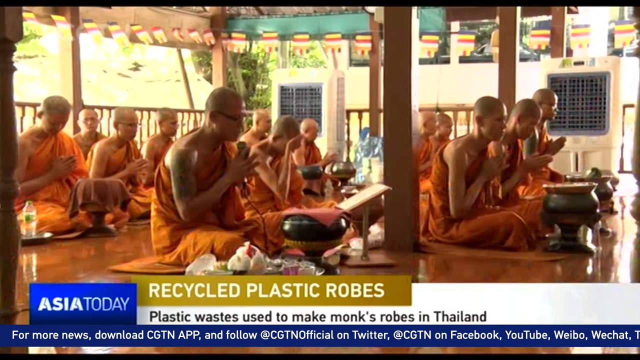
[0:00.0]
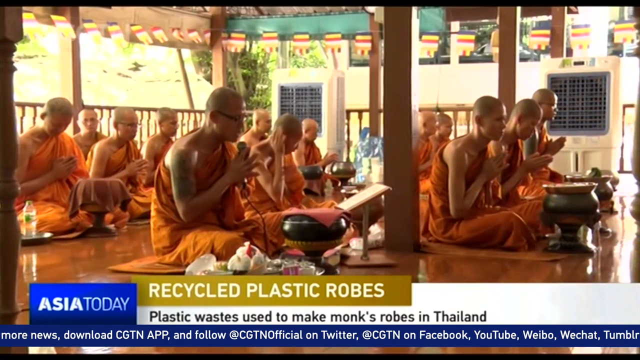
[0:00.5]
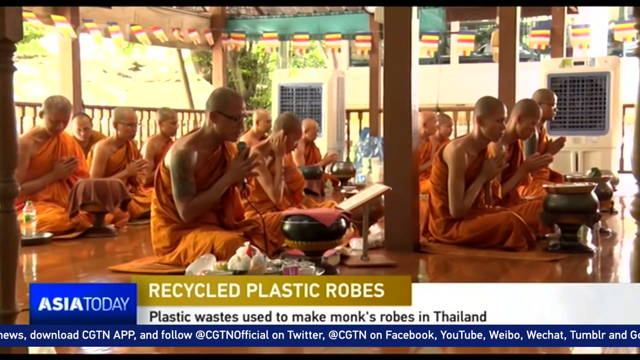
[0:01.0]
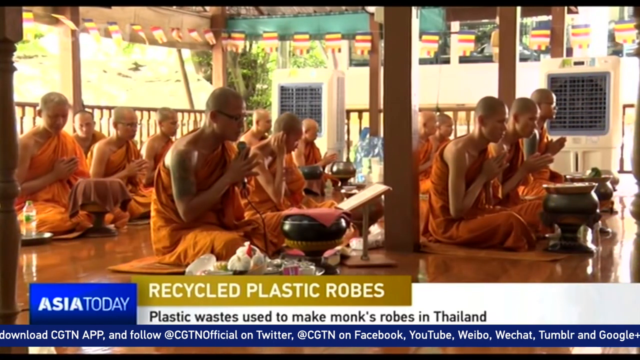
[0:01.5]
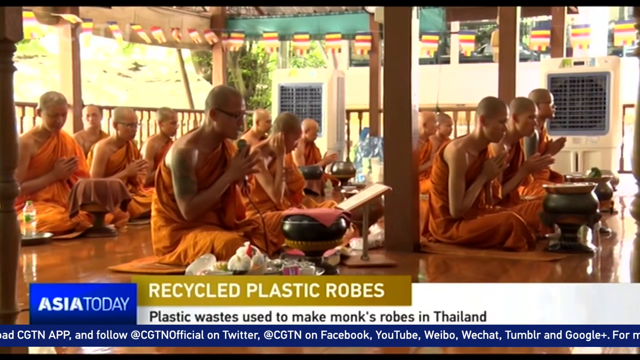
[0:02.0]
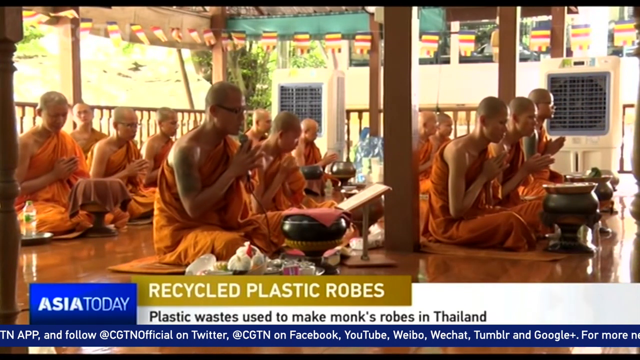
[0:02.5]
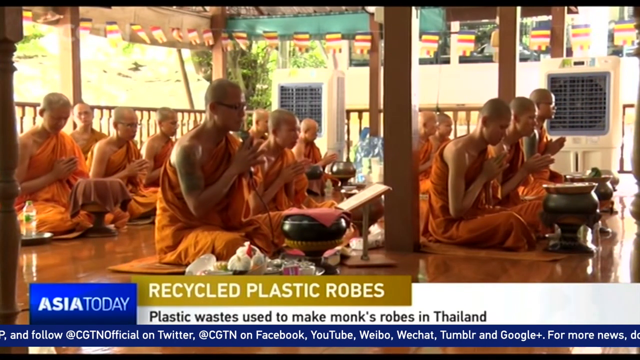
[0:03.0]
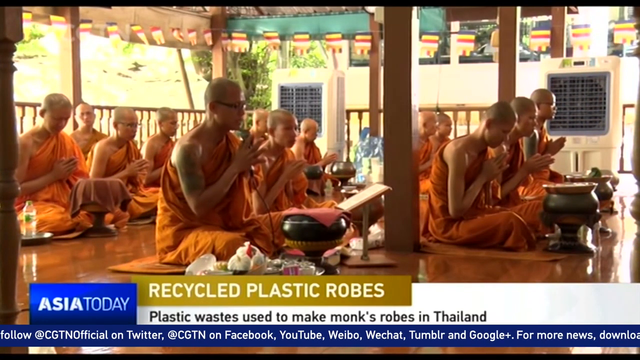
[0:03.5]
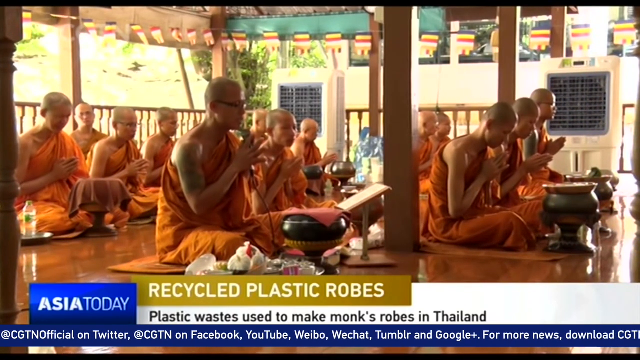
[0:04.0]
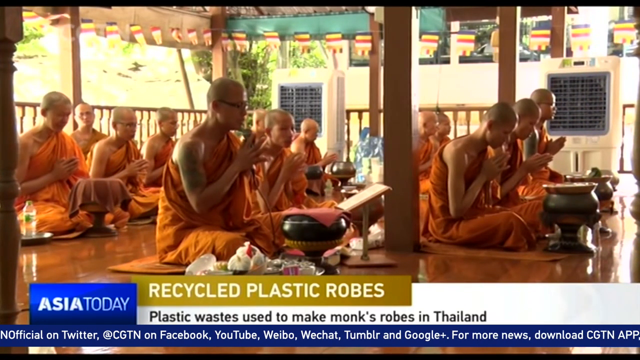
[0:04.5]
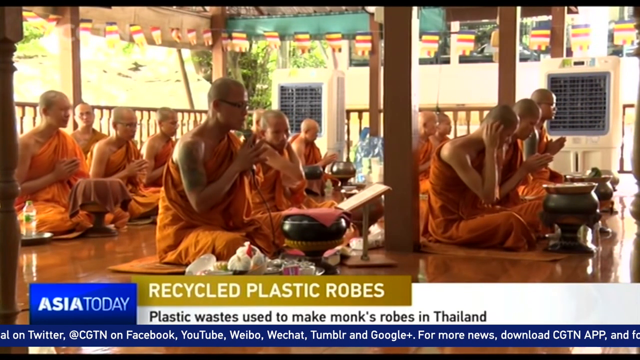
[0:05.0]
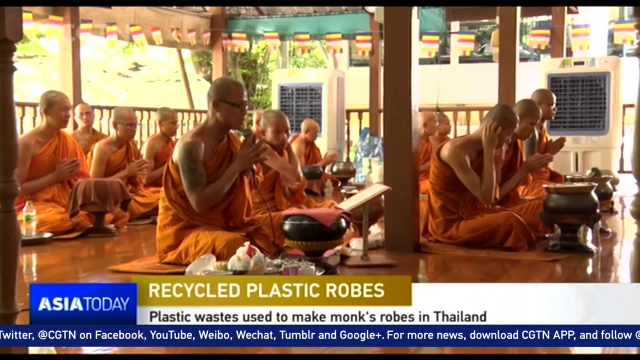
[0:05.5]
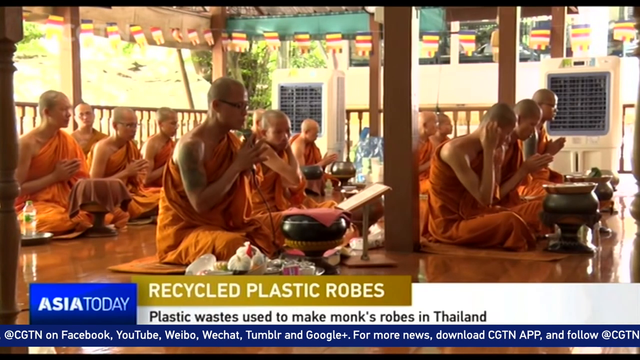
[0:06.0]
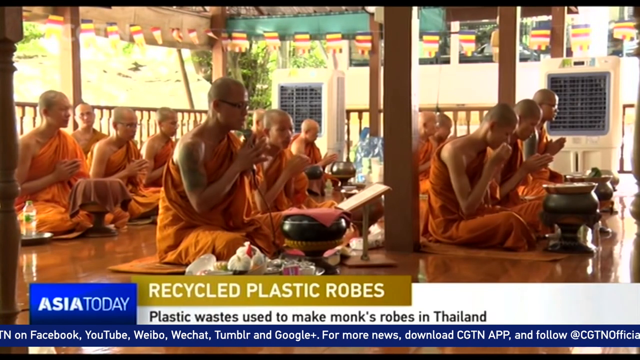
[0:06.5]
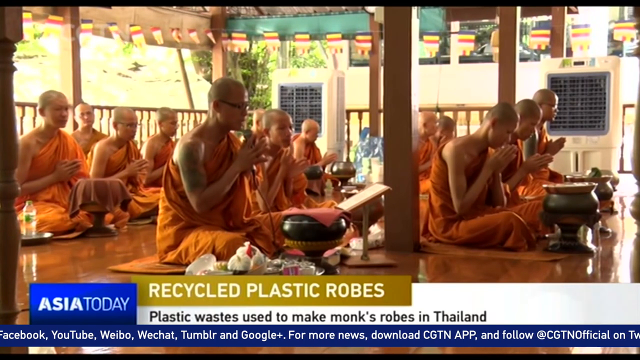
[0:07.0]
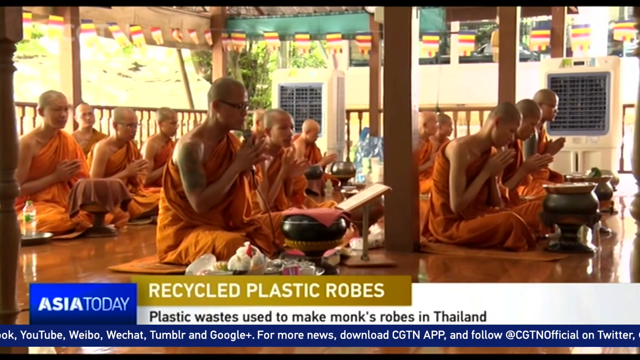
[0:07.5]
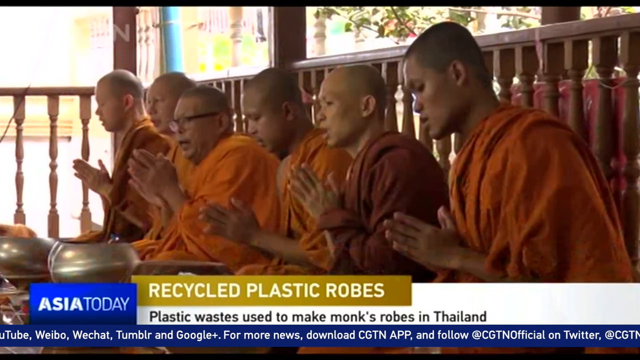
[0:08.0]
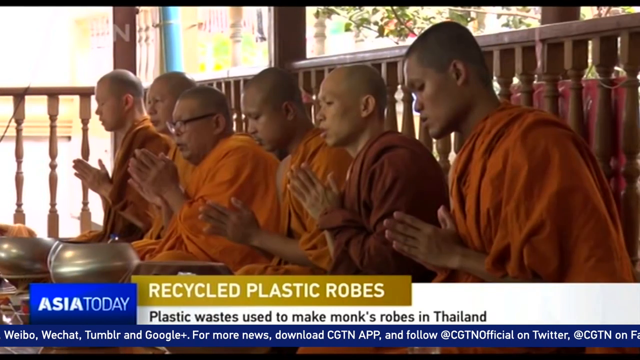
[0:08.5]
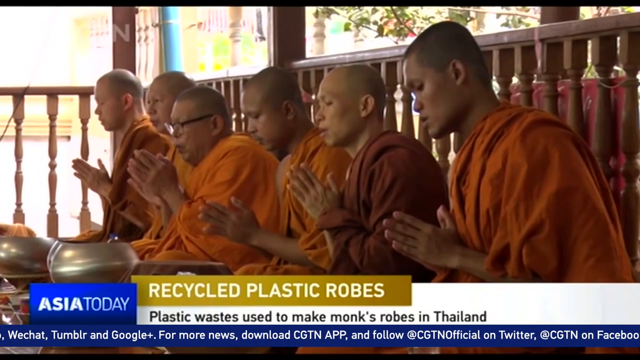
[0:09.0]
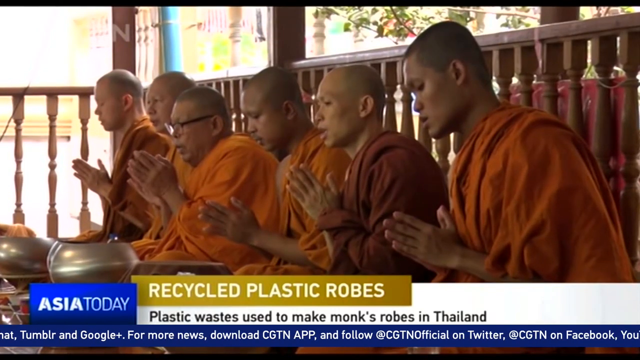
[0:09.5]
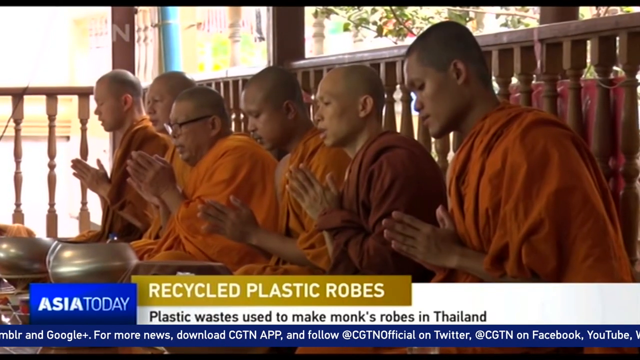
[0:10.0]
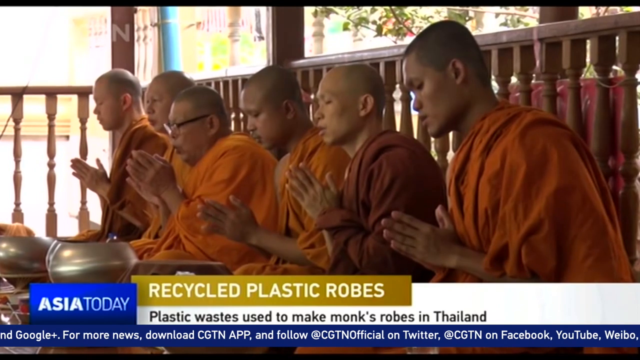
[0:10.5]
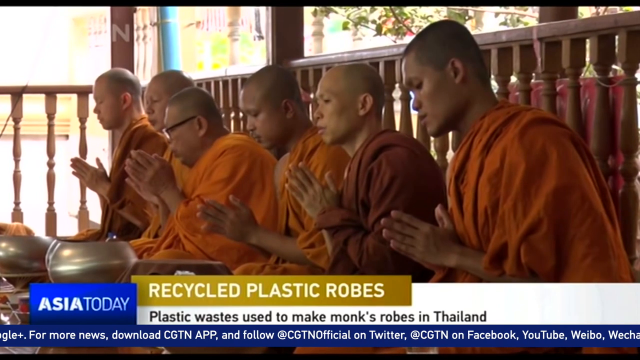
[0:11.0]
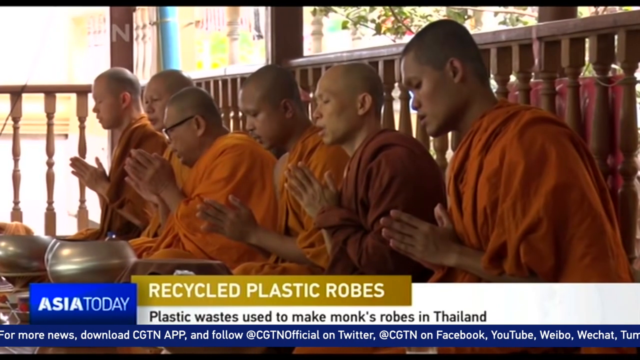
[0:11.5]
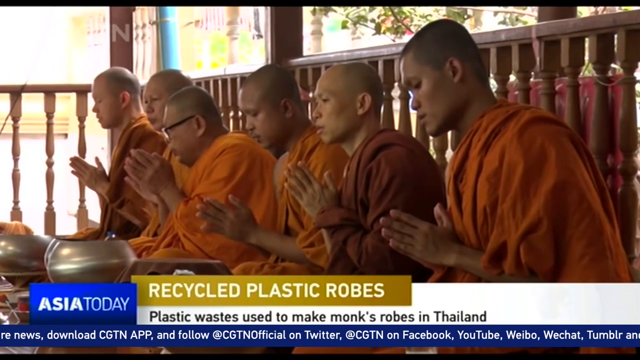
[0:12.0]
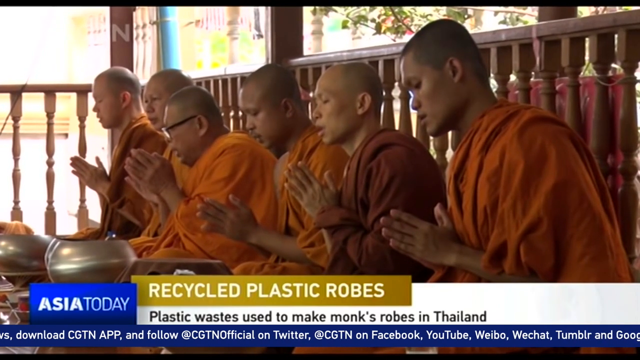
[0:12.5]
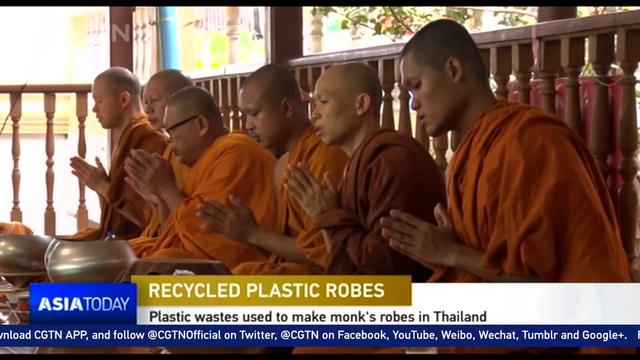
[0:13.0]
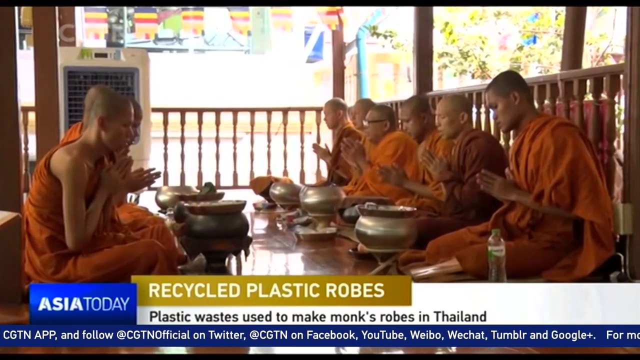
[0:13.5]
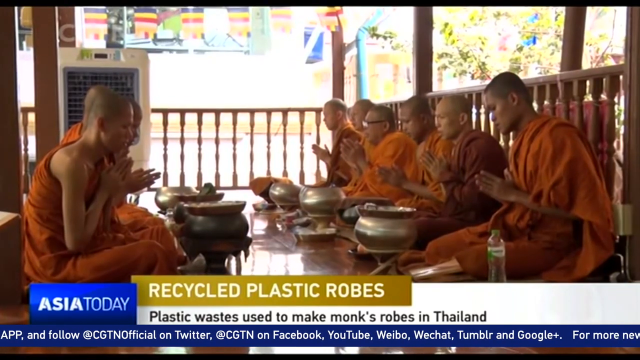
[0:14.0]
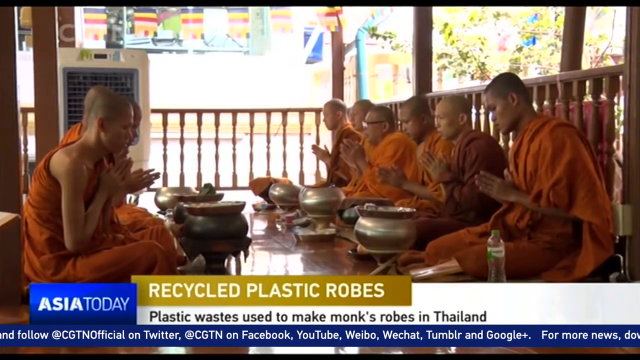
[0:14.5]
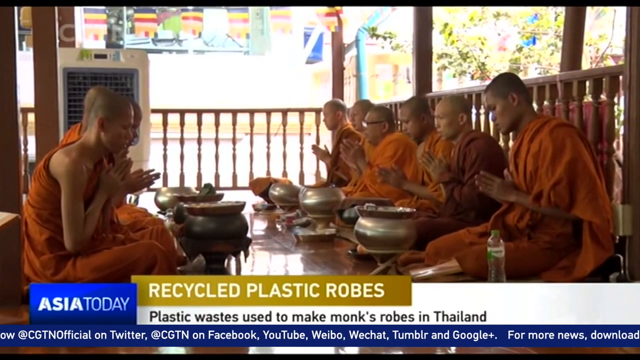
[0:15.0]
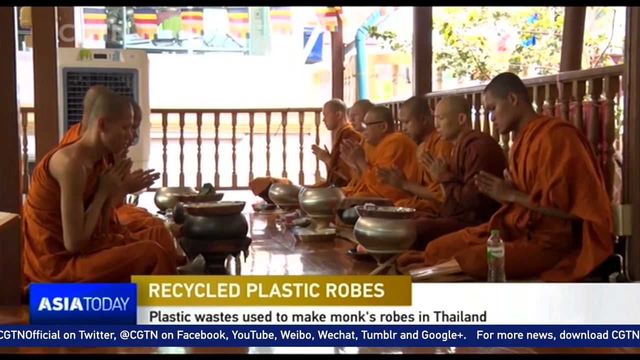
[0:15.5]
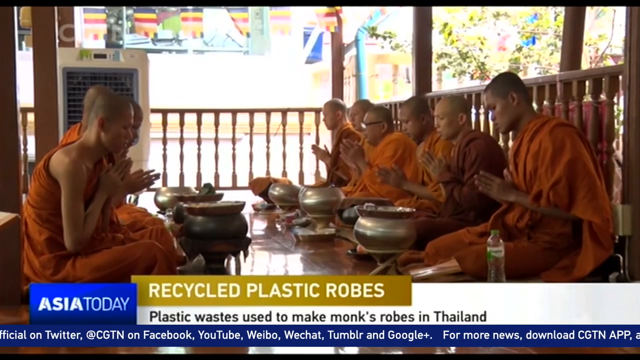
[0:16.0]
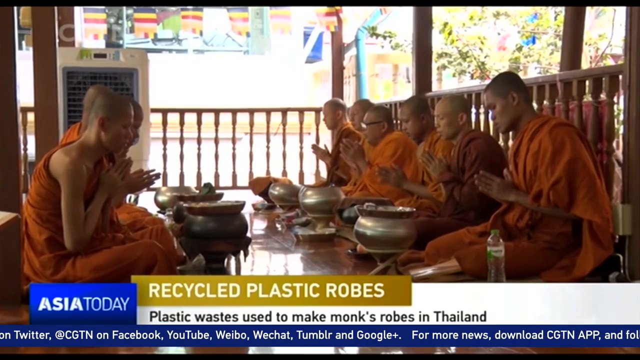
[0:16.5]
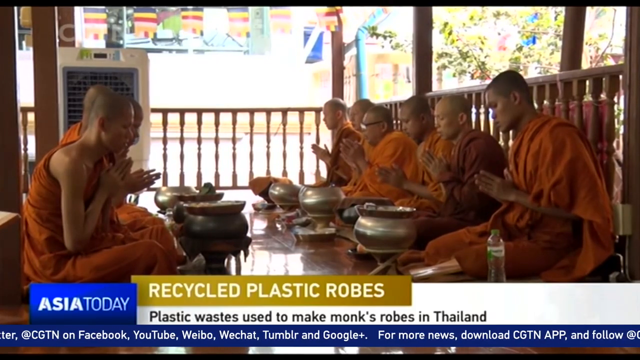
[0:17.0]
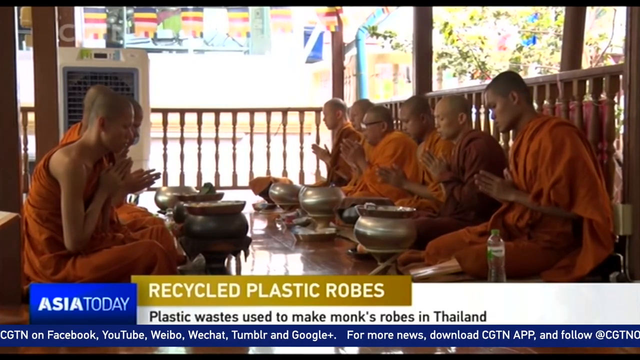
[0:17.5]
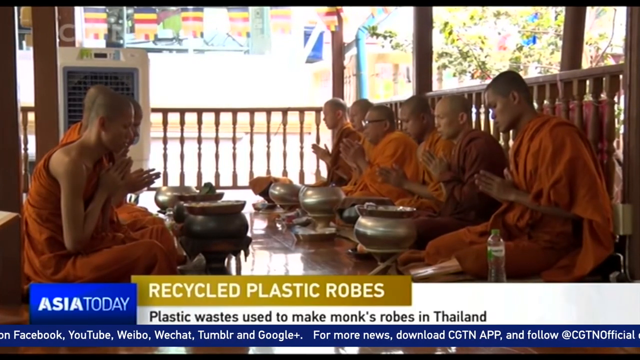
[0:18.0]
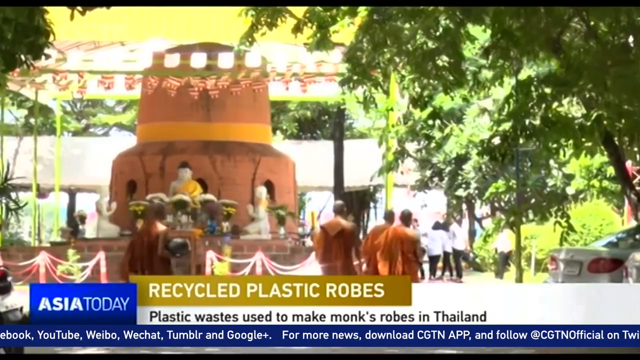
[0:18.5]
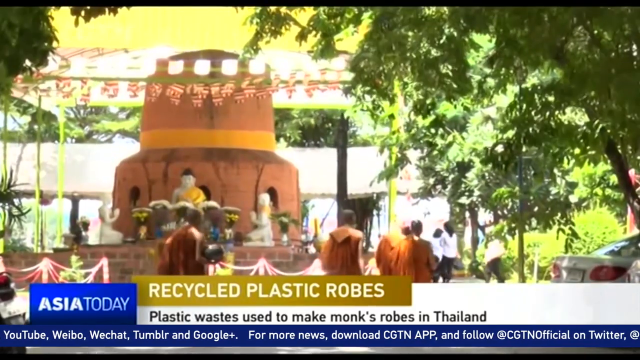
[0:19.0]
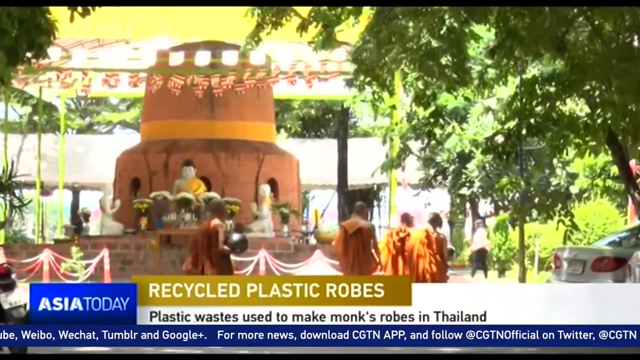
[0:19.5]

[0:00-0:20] Men in orange robes are praying, seated in rows facing to the right with their hands folded together. In the left corner there is a blue background with the text "Asia today", and a headline reads "recycled plastic rocks". The place where they pray looks like an open space, and small flags hang on top of the roof. Next to where the men are seated, a roof can be seen further back. The men continue to pray; behind them are wooden pillars in what looks like a cage, and in front of them are big silver pots. Next, men are seated facing each other.